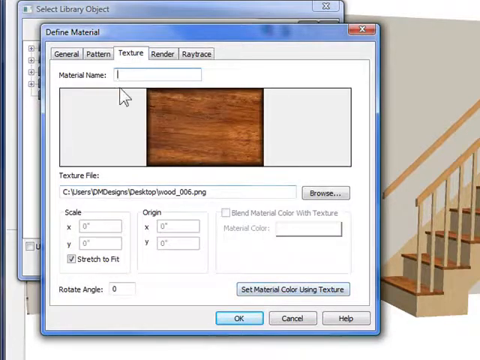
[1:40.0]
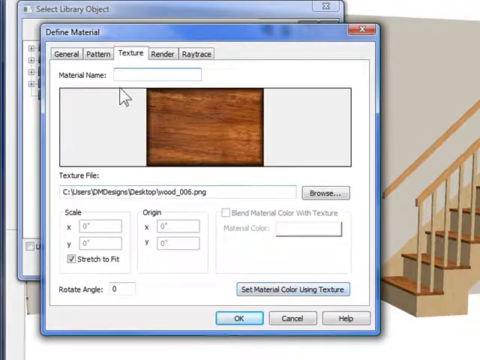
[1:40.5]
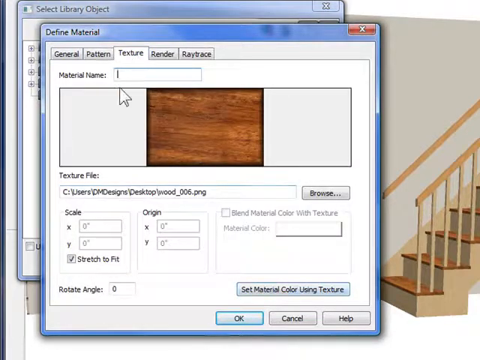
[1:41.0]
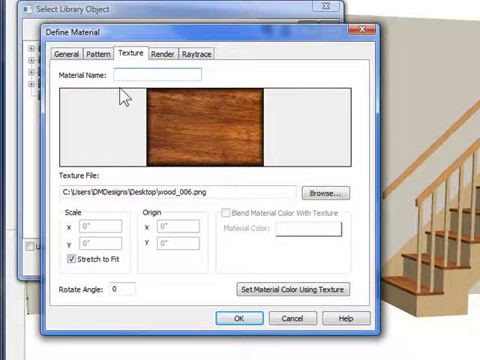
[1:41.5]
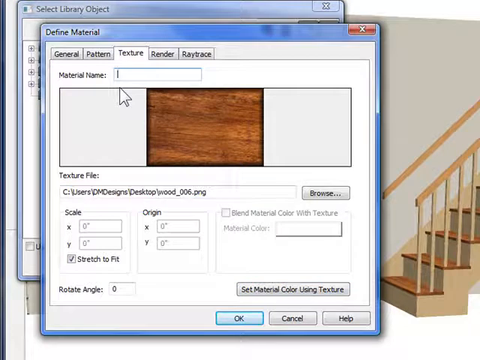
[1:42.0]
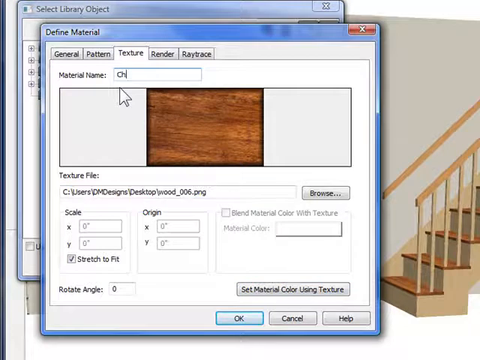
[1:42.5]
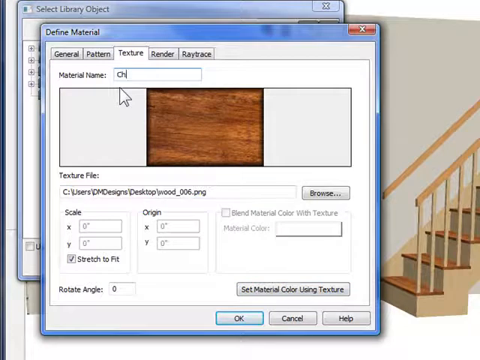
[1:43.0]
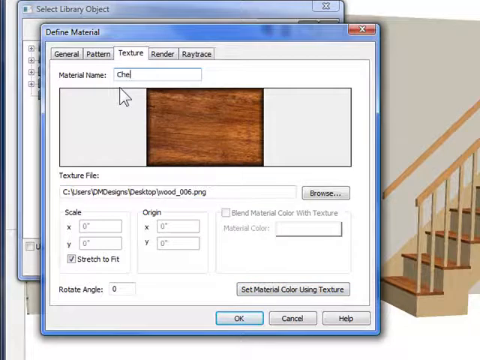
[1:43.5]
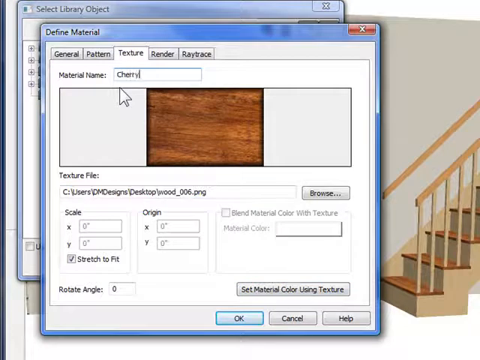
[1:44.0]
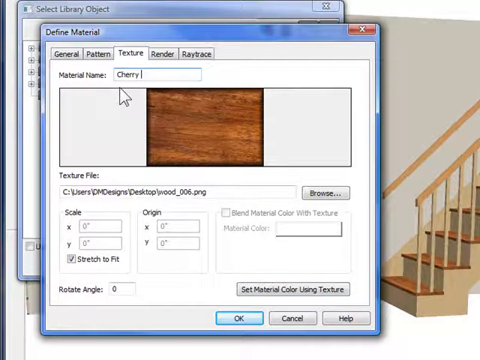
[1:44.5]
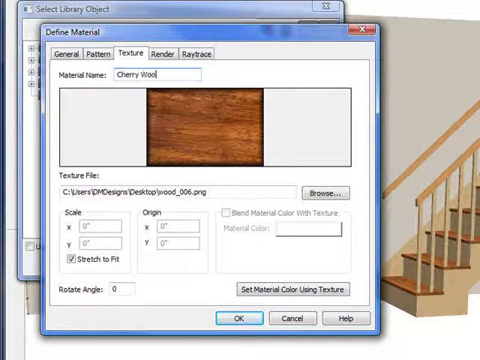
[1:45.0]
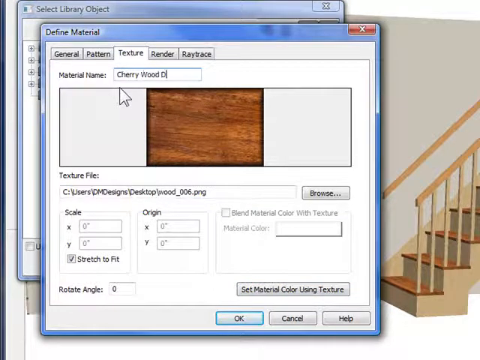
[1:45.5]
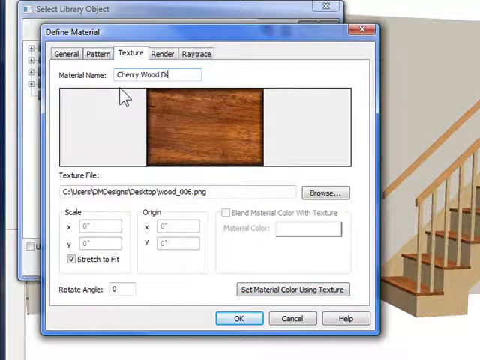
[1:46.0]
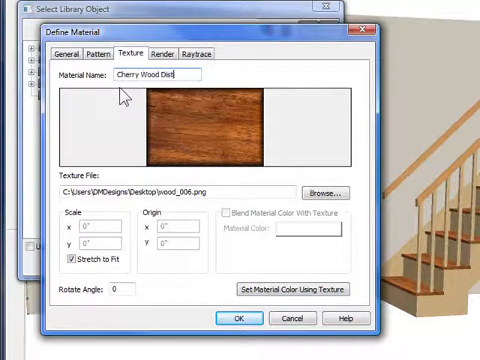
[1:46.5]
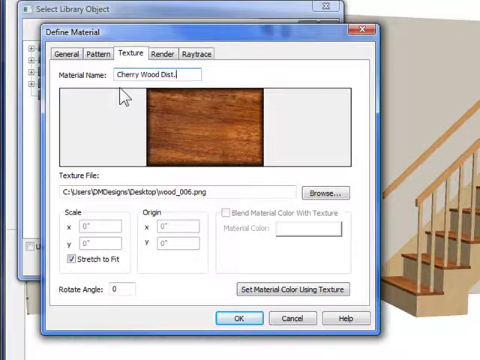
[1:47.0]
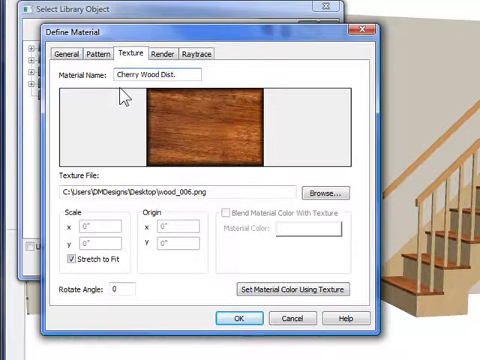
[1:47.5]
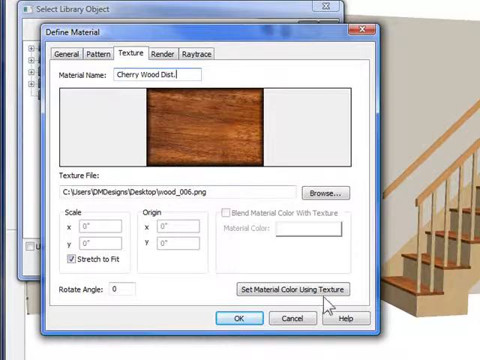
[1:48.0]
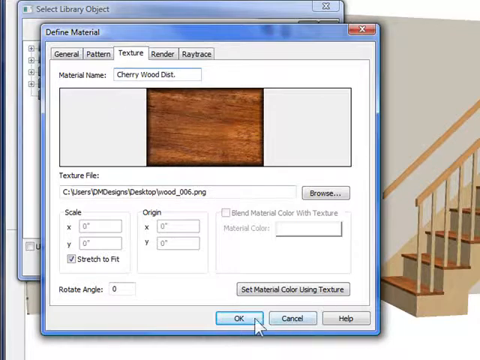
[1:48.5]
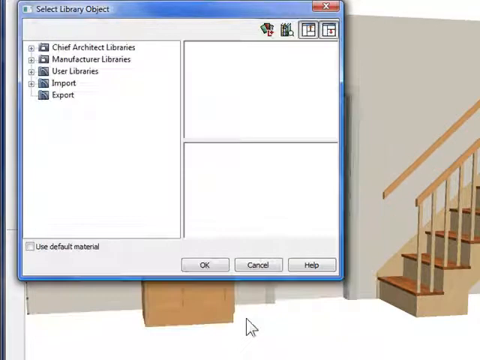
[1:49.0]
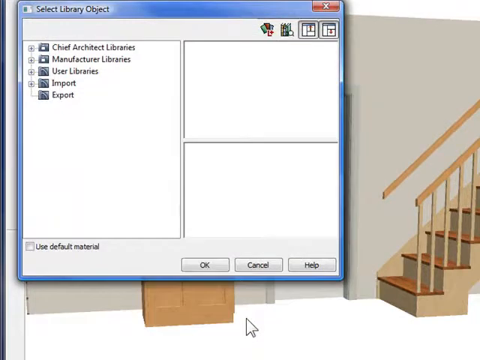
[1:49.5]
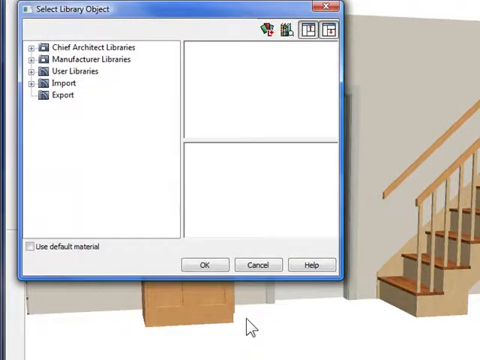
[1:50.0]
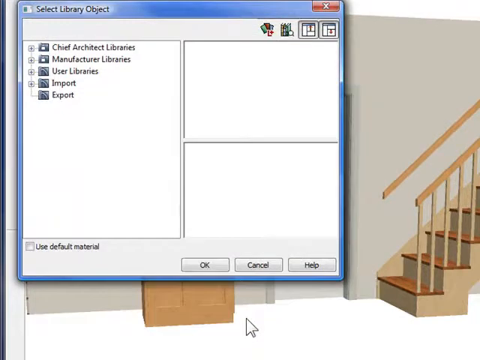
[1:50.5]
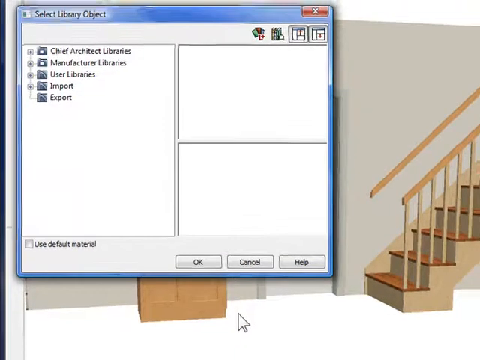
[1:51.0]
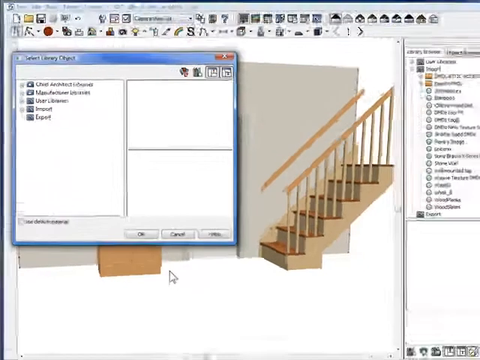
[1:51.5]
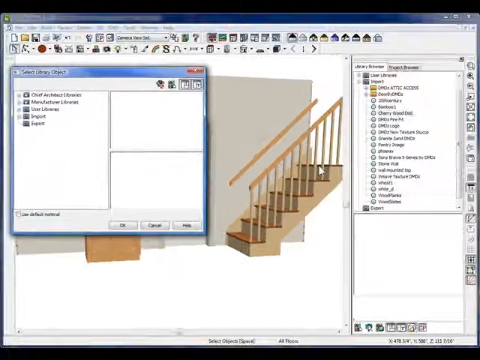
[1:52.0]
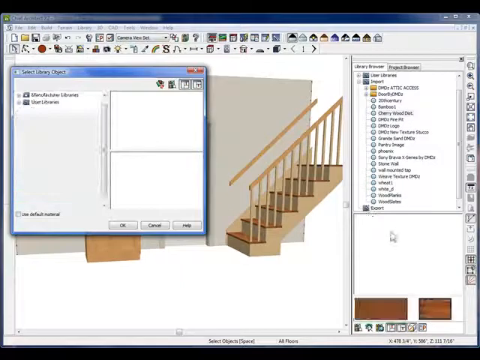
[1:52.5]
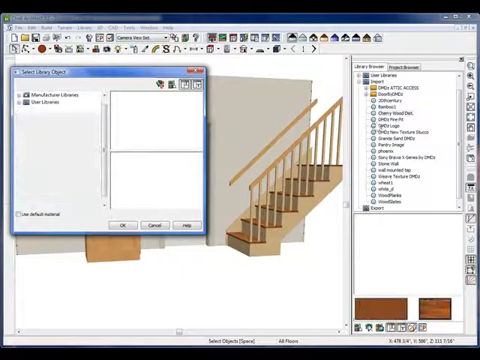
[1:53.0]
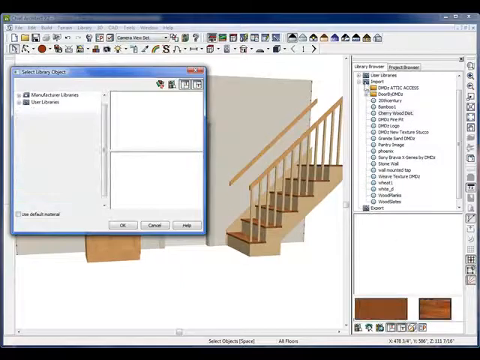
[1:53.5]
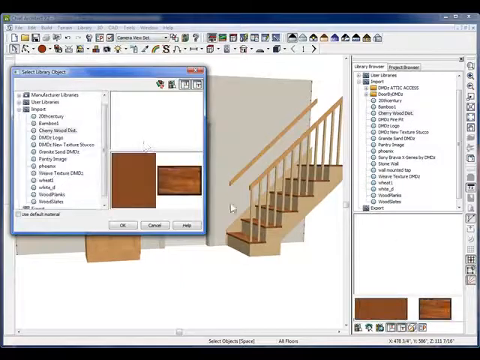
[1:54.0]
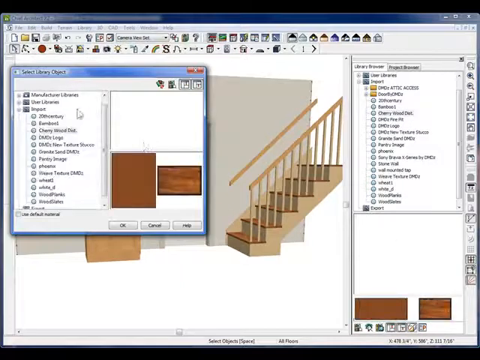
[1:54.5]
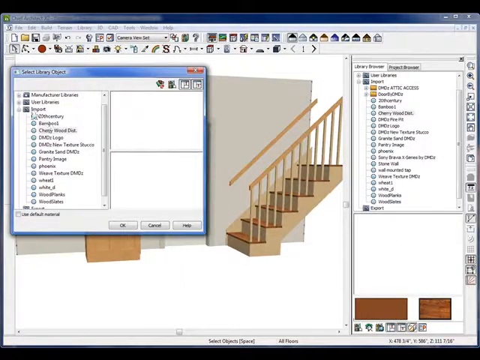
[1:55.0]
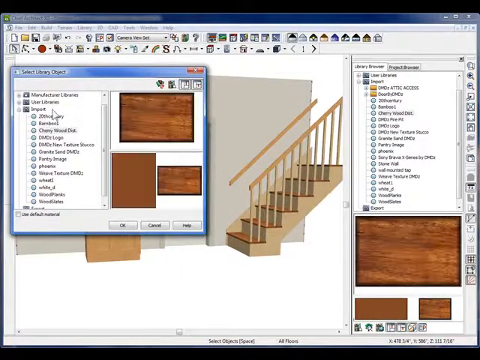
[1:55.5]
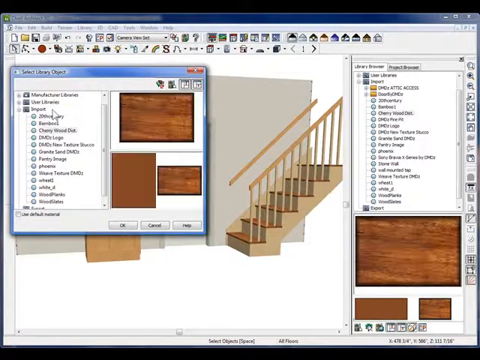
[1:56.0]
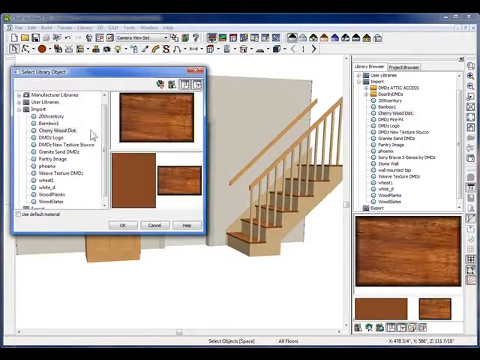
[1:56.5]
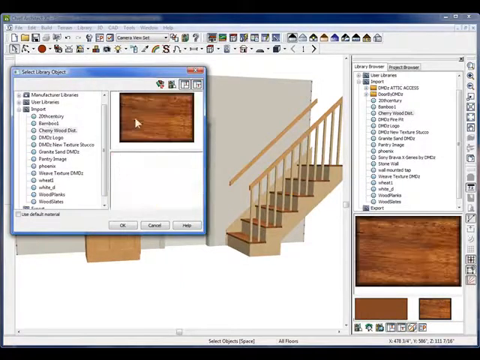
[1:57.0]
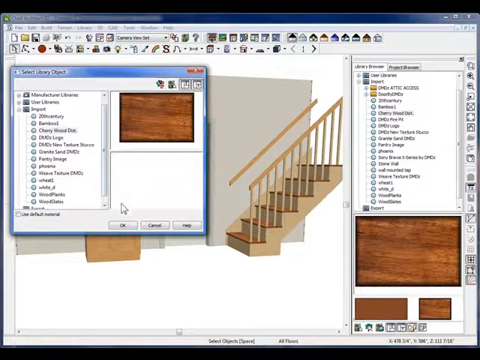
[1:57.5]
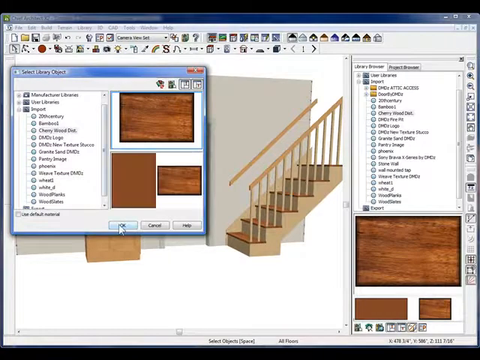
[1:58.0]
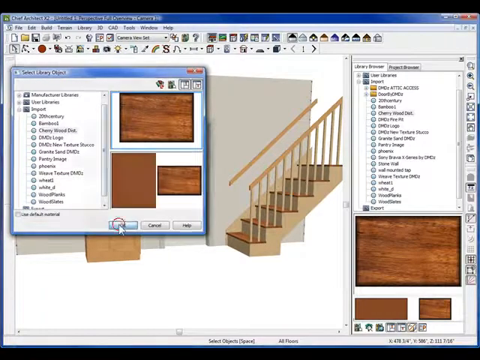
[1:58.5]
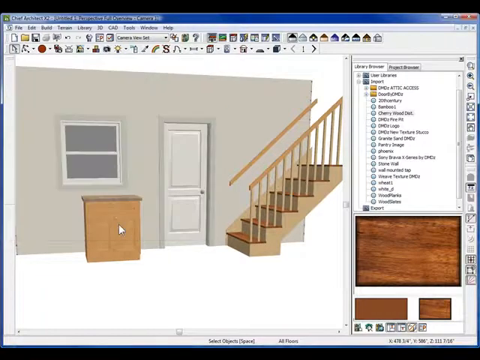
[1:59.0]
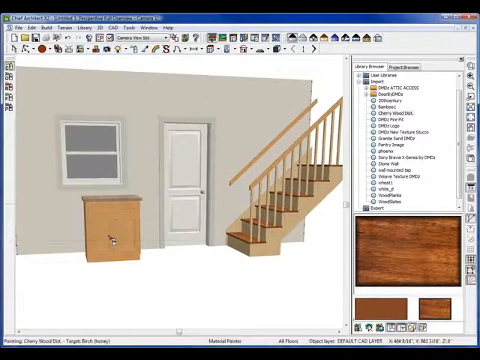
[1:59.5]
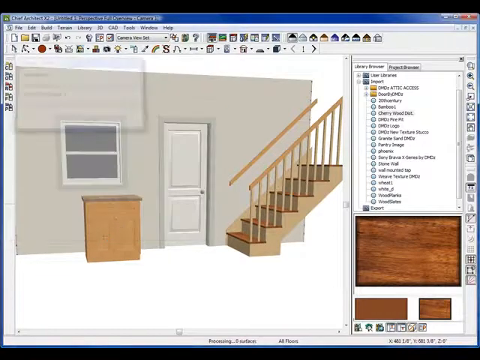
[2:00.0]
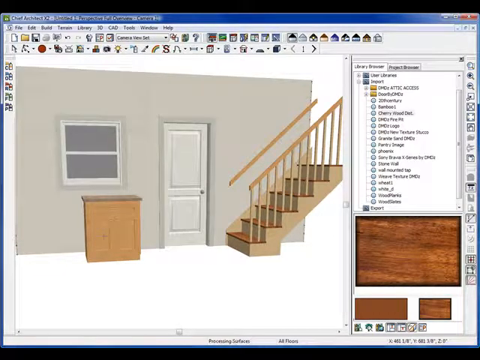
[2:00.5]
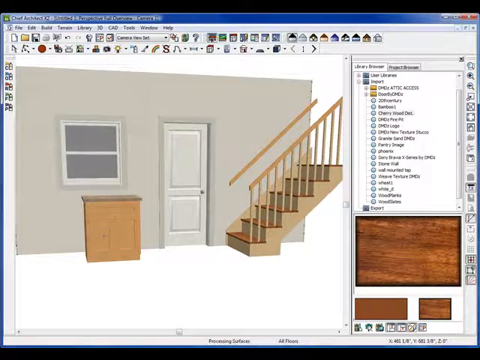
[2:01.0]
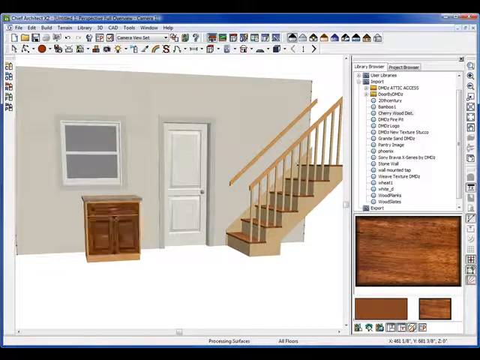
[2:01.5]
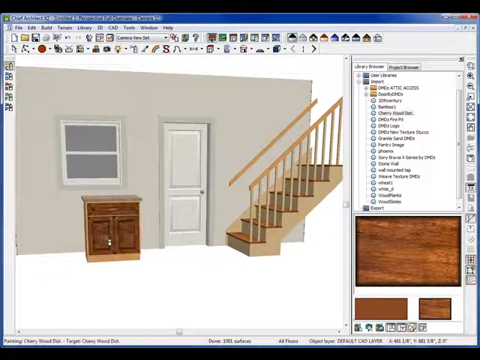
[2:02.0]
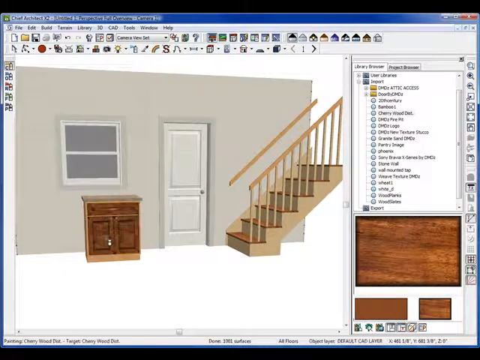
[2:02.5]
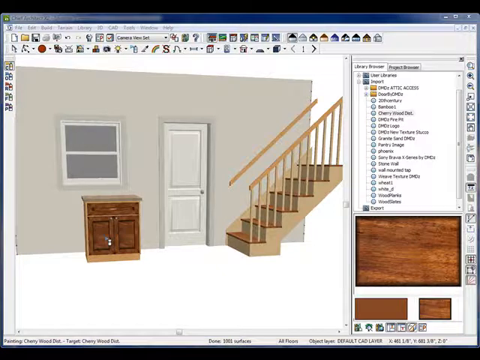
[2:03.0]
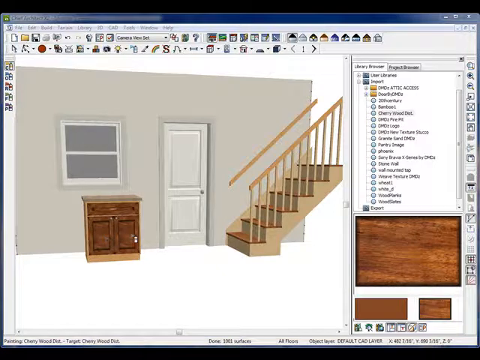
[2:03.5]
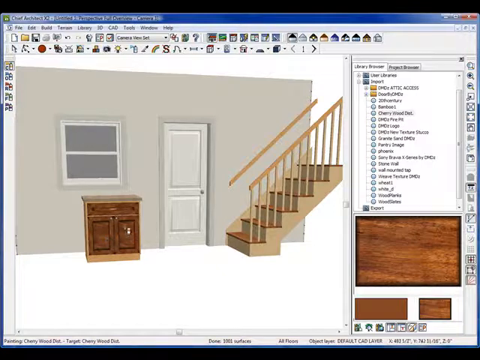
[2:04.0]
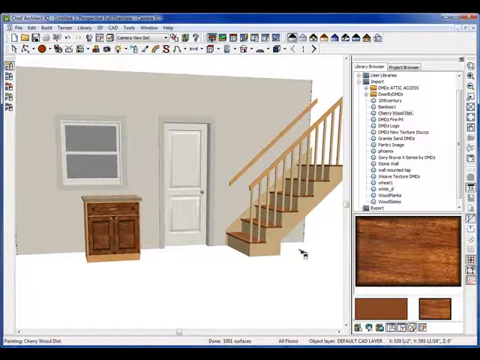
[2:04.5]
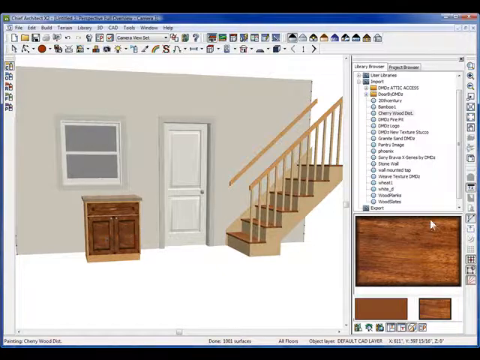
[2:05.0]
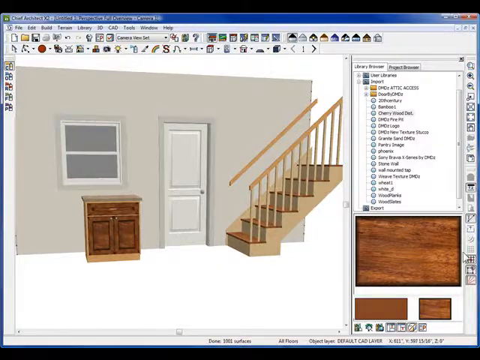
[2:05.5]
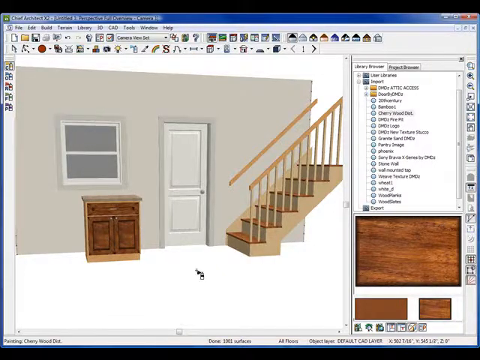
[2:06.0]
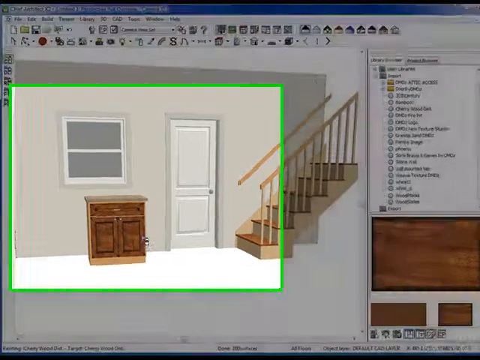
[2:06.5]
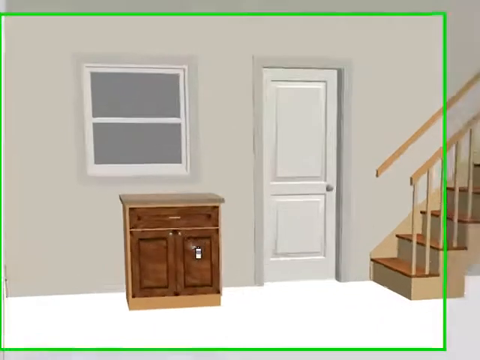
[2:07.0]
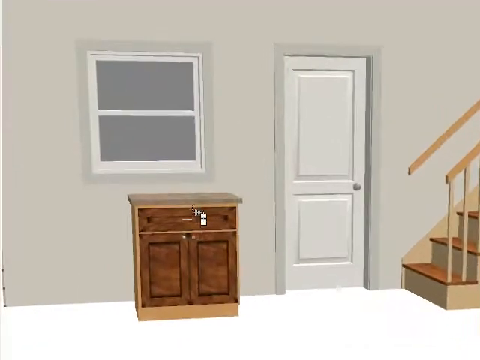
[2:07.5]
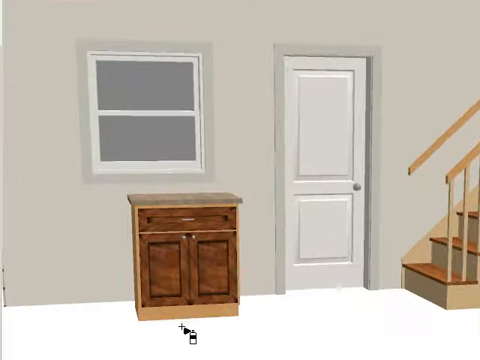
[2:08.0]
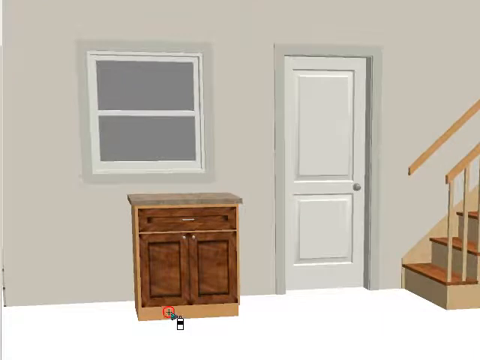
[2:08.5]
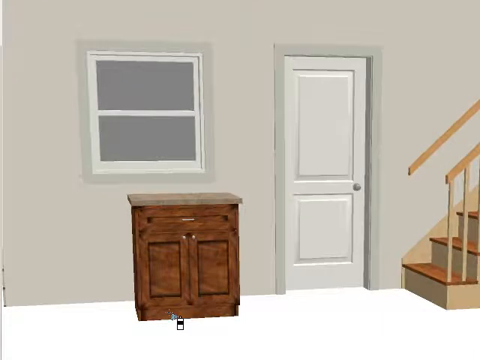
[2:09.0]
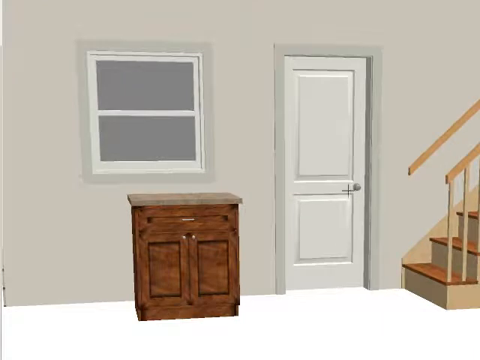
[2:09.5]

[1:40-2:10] Under material name, the entry reads "cherry wood dist", on the same menu showing the wood grain option, apparently as a label. After clicking out of that screen, a screen with "select library object" at the top and several text options appears. That recedes to give more of a view of the staircase, while a text window on the left covers everything else. Menu options are listed on the right, probably about 20 of them. In the lower right there are wood grain options, one solid and one more textured, and the same square wood grain and solid brown options then appear in the open window on the left, with a wood grain square above them, so three squares of wood options show on the left and in the lower right. The window then disappears and the choices are applied, apparently as a two-tone option: the nightstand has a solid brown background, with wood grain on its face with two doors and a small drawer across the top. The view then zooms in a little closer on the finished result.